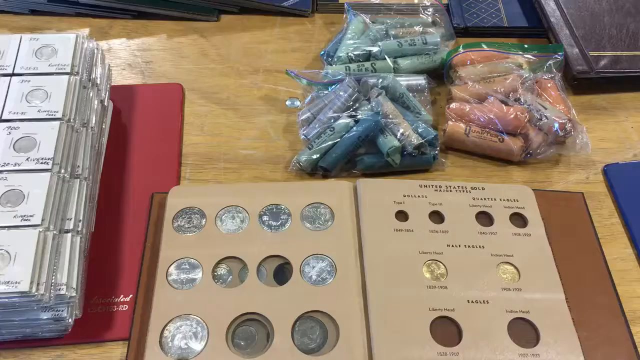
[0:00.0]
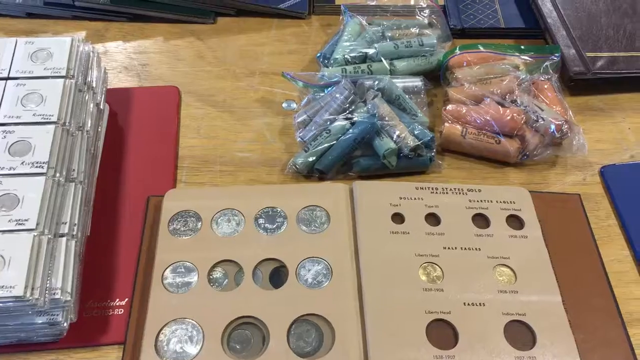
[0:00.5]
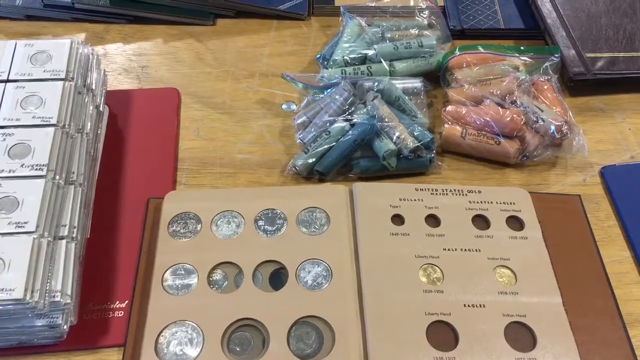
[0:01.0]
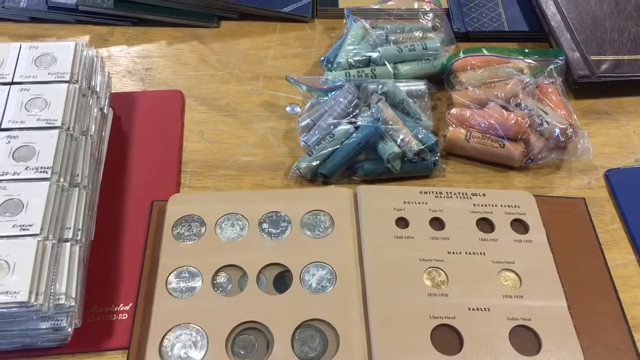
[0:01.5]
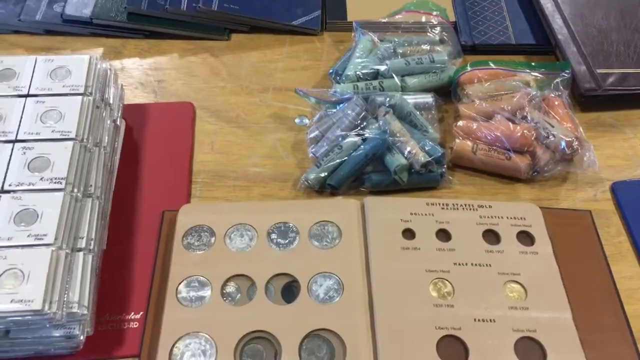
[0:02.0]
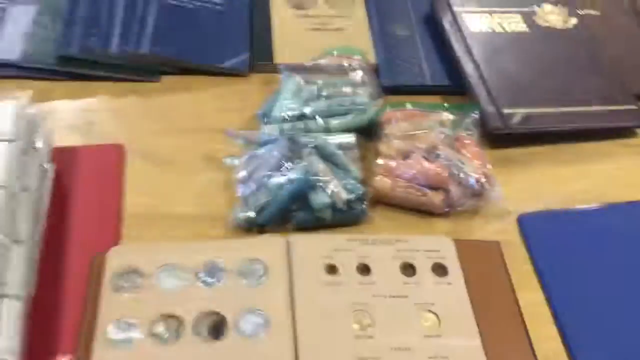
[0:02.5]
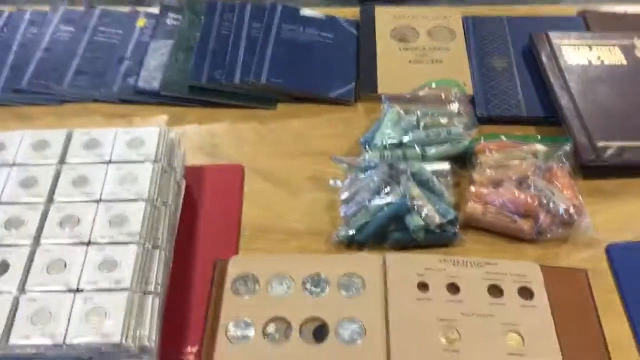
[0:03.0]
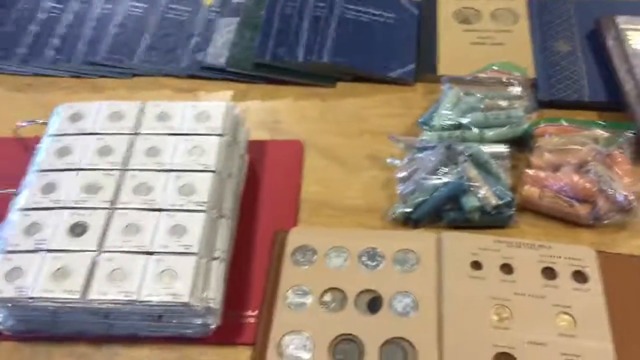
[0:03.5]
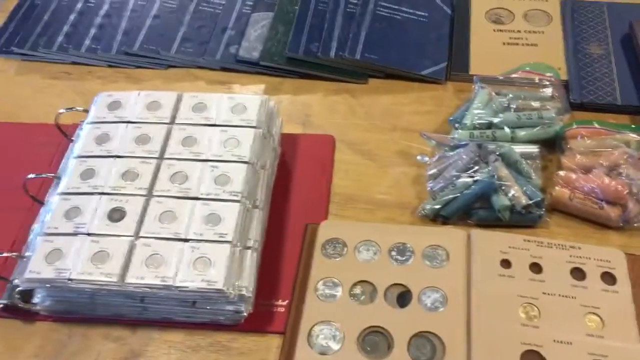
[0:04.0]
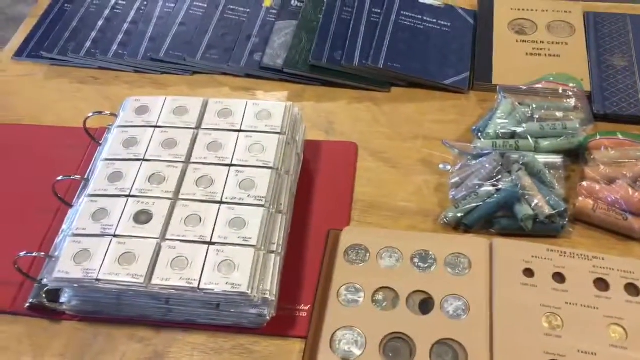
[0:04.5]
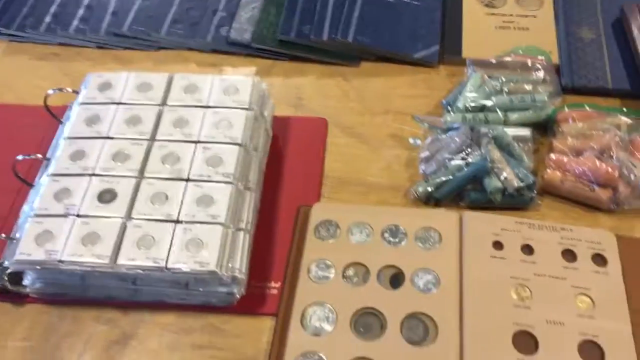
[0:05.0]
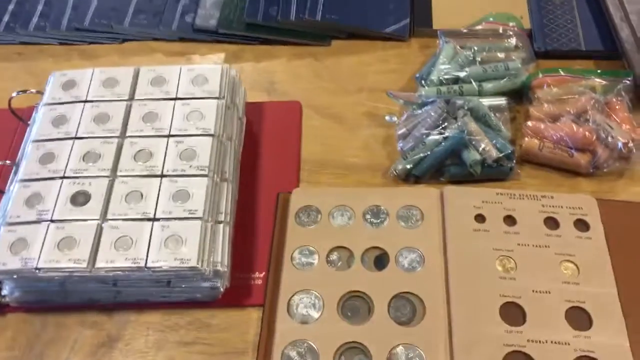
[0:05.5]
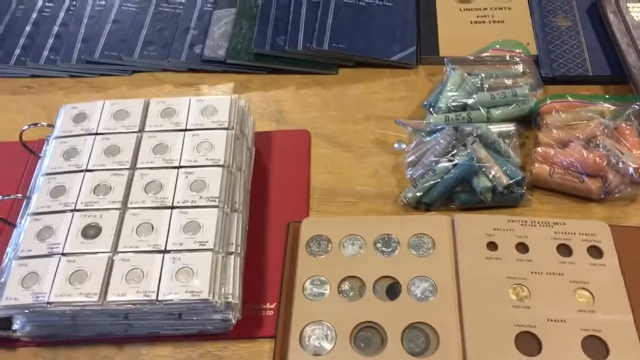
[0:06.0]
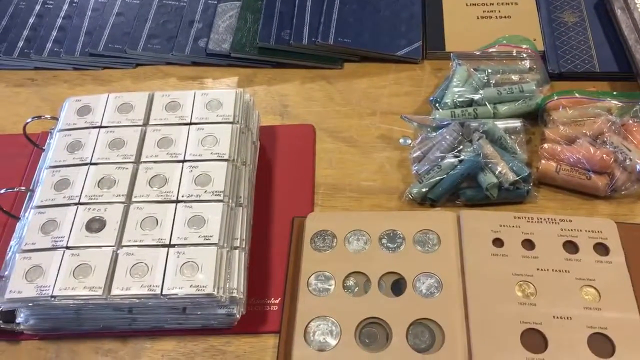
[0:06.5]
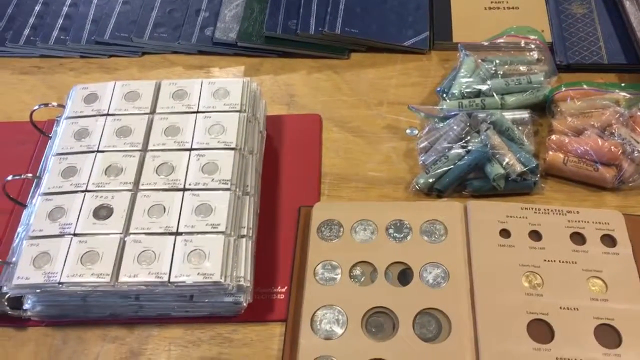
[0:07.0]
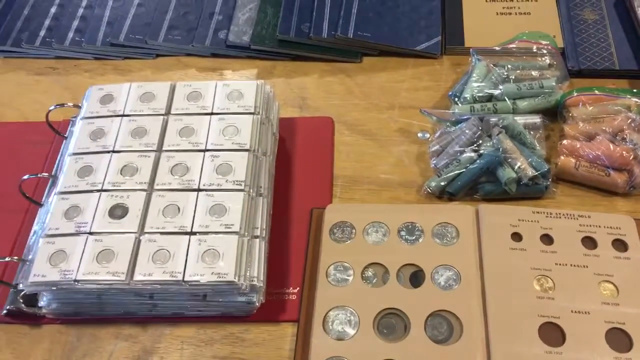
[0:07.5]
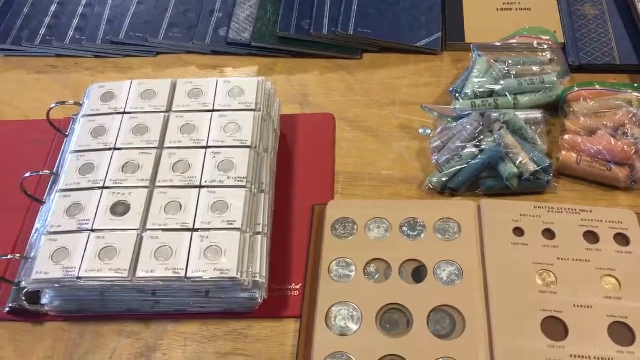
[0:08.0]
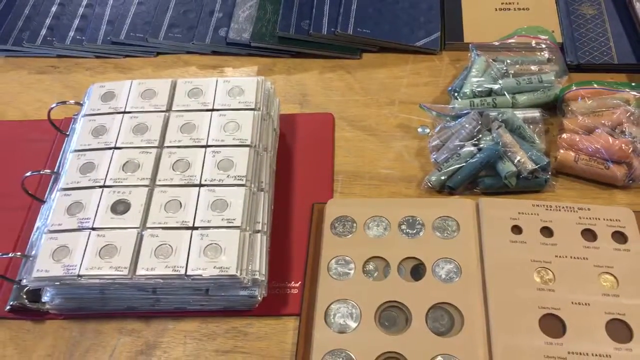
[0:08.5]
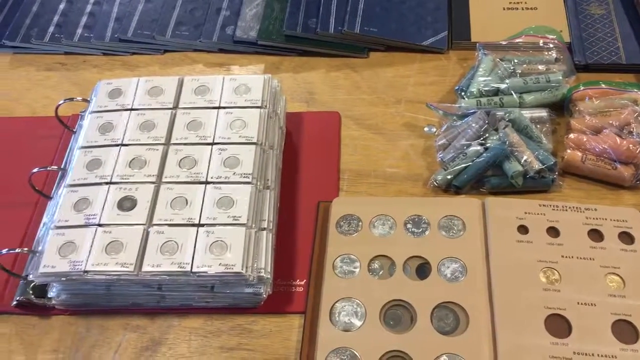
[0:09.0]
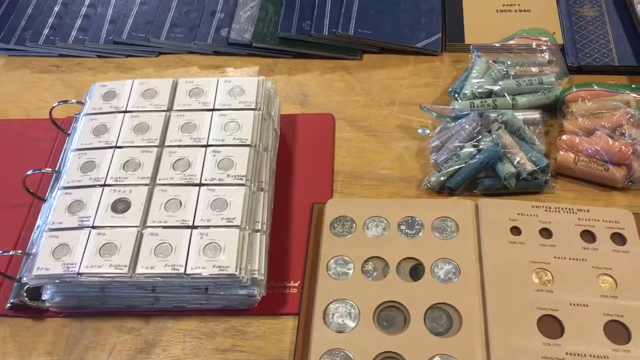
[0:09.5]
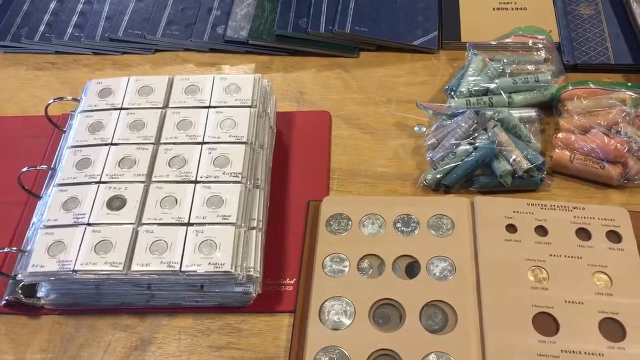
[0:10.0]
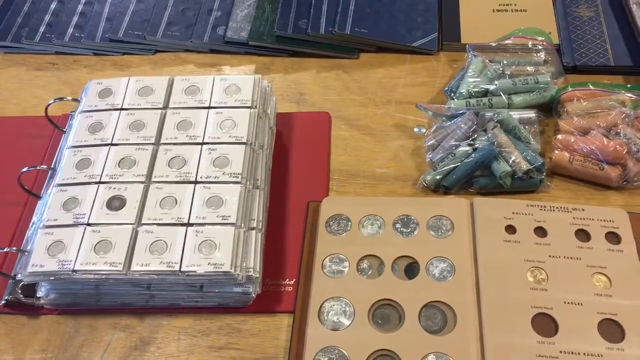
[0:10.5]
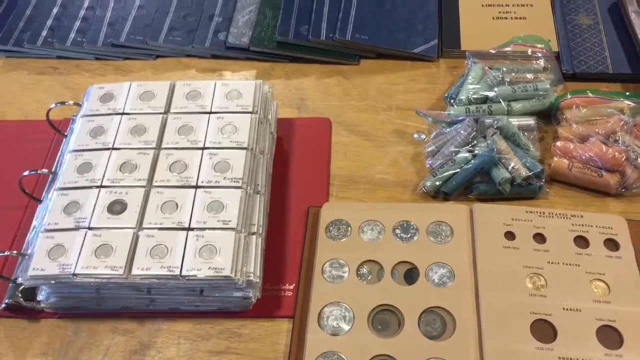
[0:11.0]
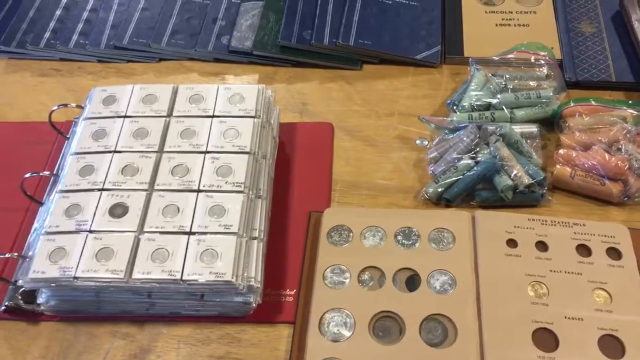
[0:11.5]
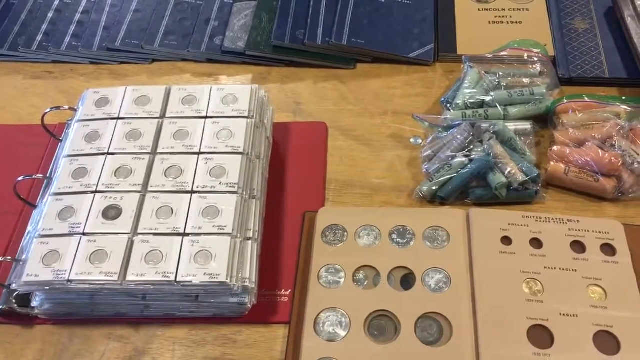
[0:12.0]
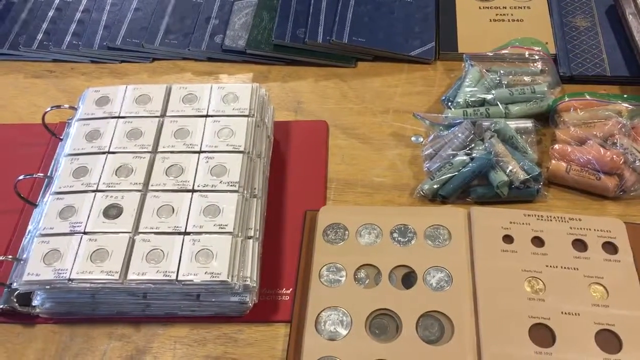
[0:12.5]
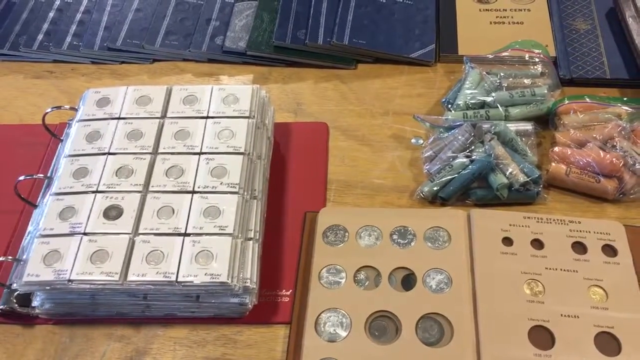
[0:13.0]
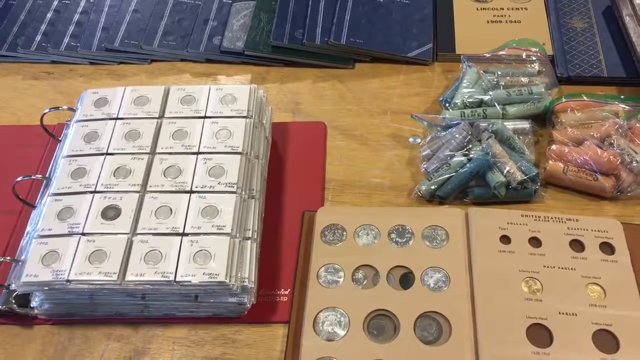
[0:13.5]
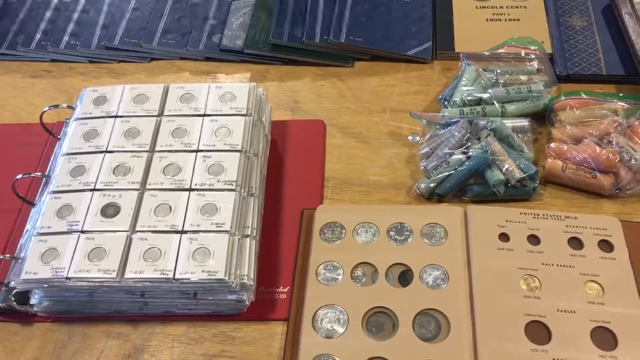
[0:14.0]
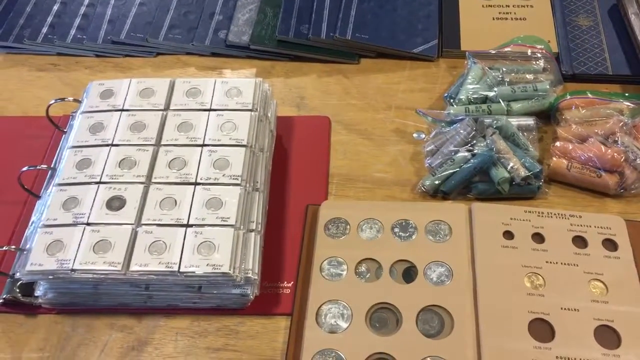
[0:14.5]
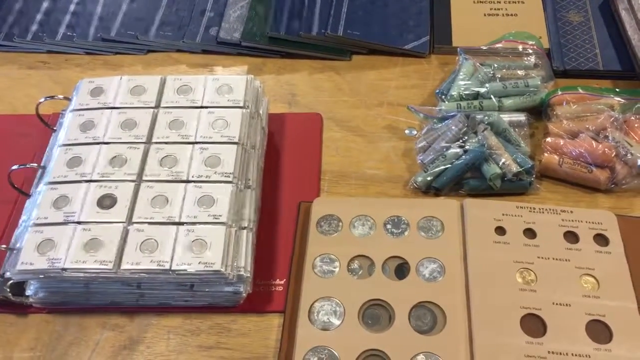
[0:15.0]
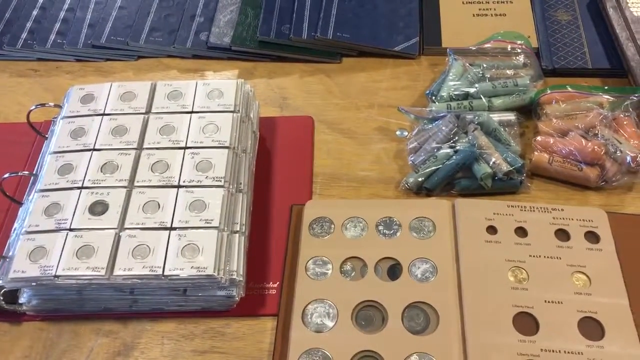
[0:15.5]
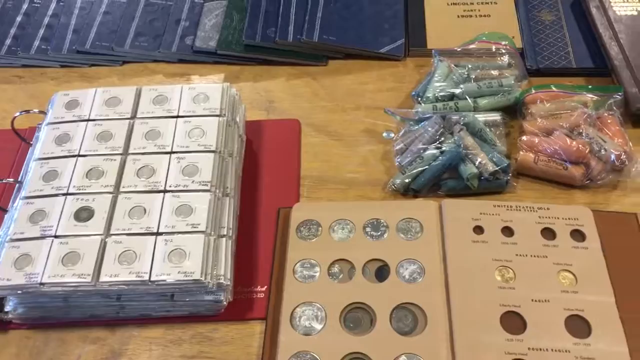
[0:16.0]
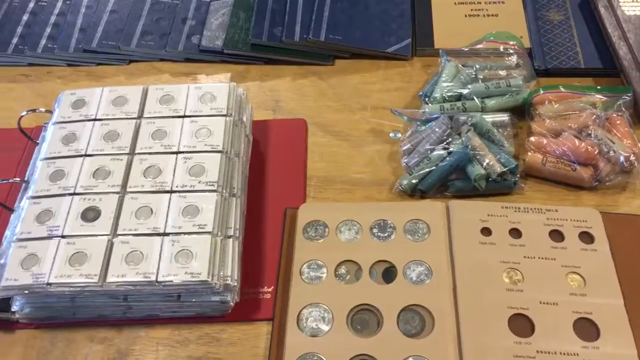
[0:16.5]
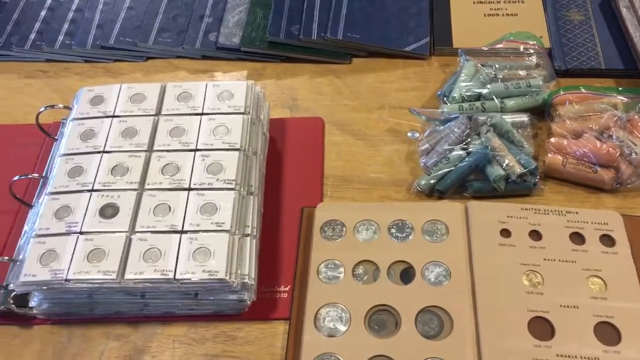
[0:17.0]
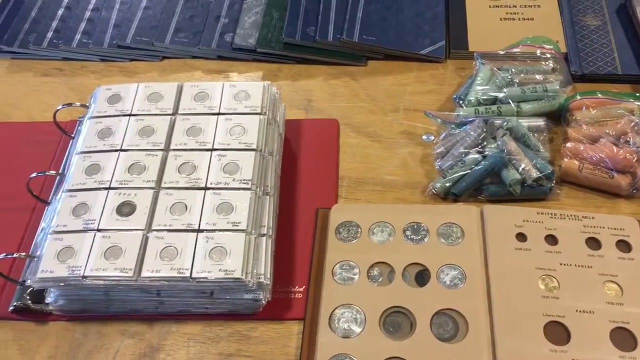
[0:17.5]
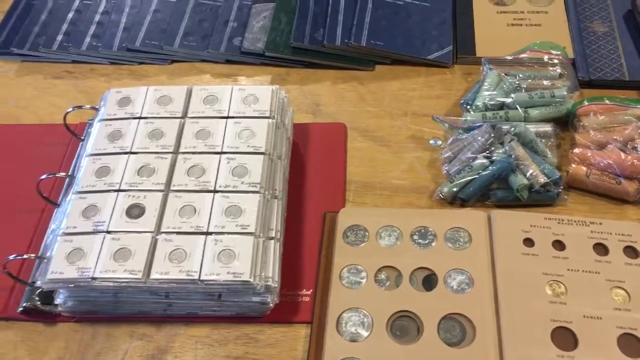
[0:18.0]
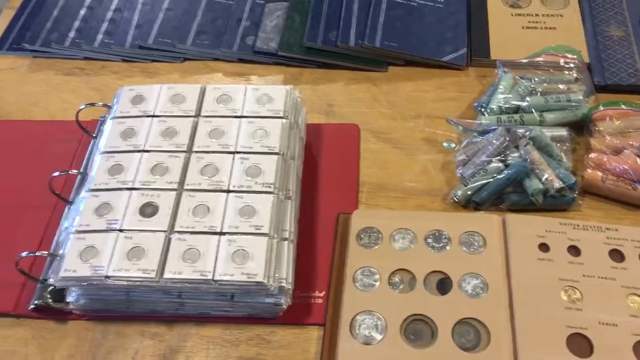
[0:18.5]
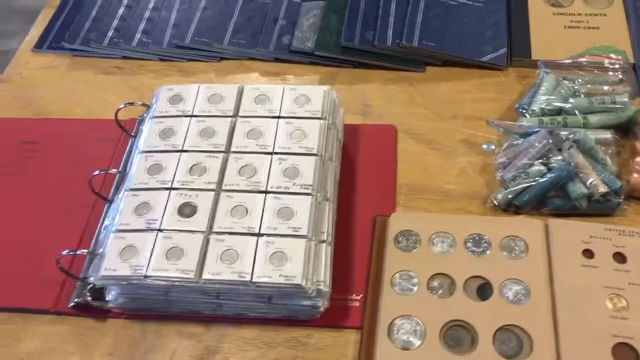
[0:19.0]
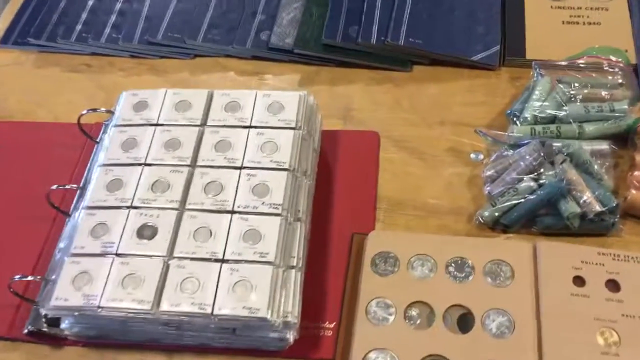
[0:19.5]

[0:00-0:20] Many items are on a table, apparently makeup items. The table is brown, made of wood and heavily varnished, so it shines. Many of the items seem to be eyeshadow in gold and silver colors. Other items in plastic come in different colors, including peach, powder blue and gray, and seem to be lipstick. A lot of closed eyeshadow items are on the table. One item is in a big maroon file; it looks like a file but is a pack of eyeshadow with a silver color. There are eyeshadow covers in blue, brown and maroon, and the lipsticks are visible in different colors.